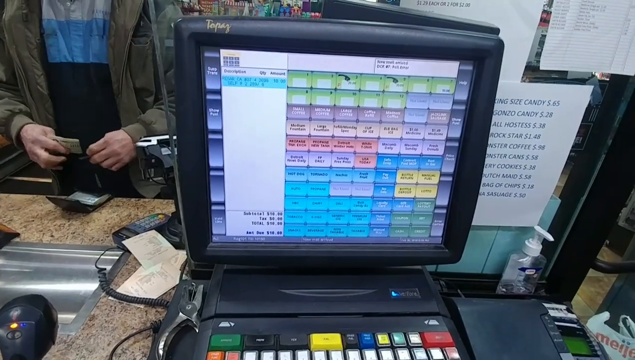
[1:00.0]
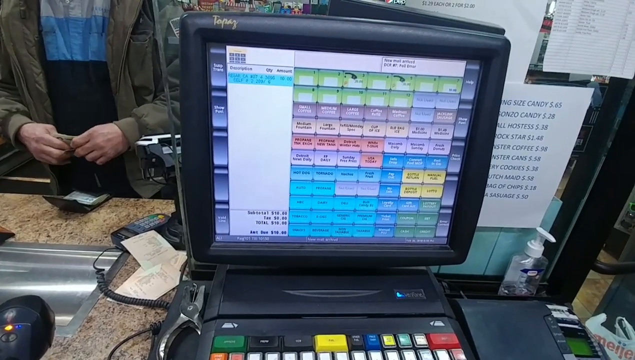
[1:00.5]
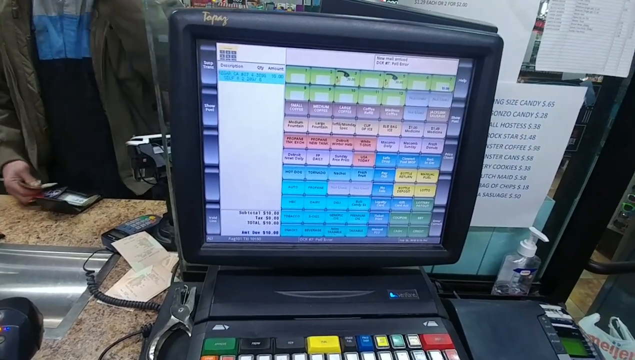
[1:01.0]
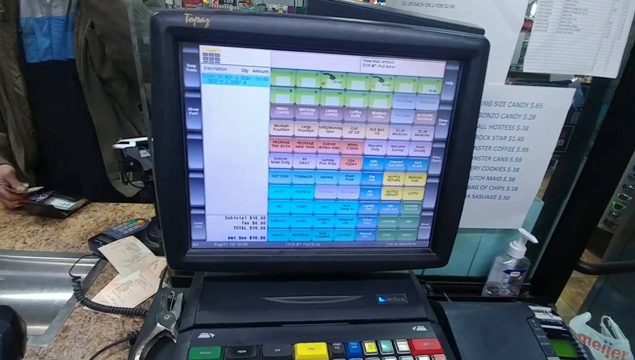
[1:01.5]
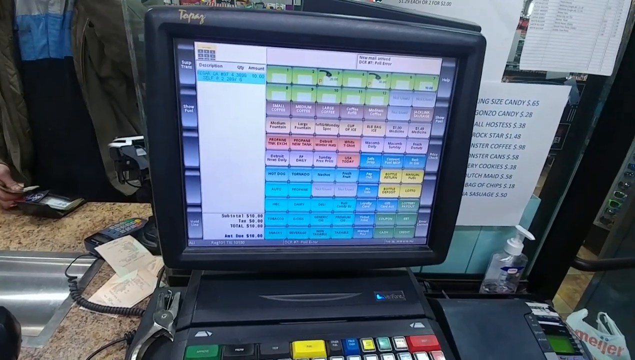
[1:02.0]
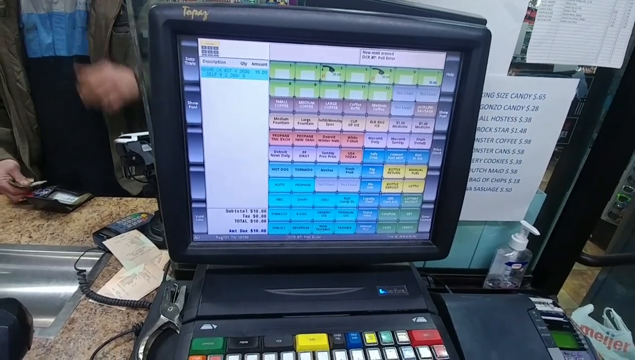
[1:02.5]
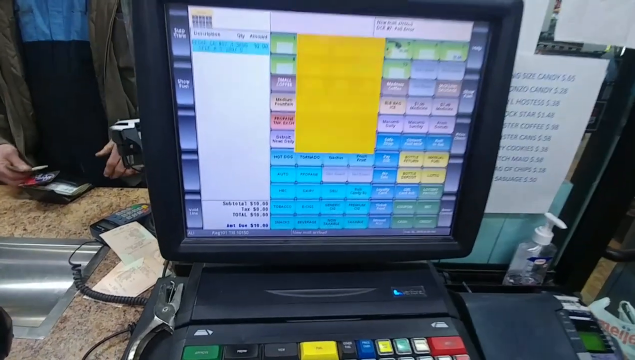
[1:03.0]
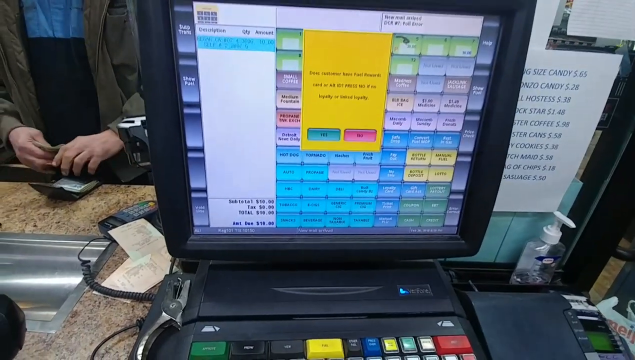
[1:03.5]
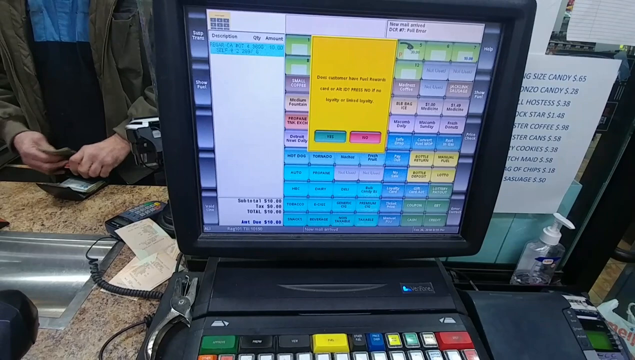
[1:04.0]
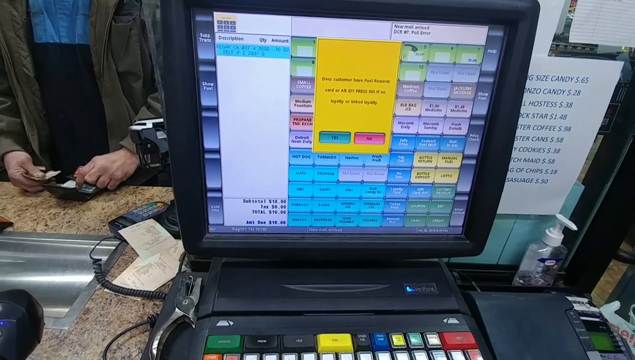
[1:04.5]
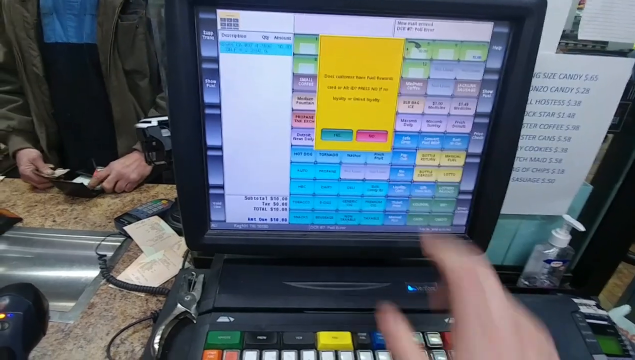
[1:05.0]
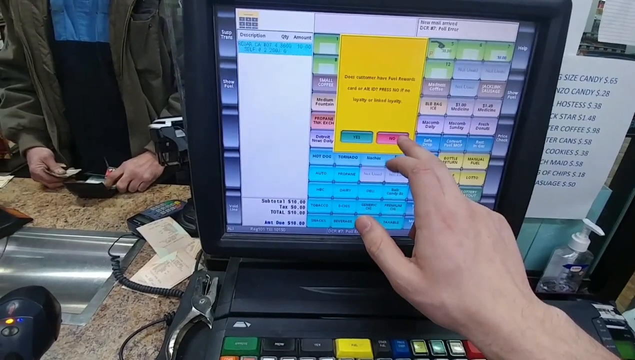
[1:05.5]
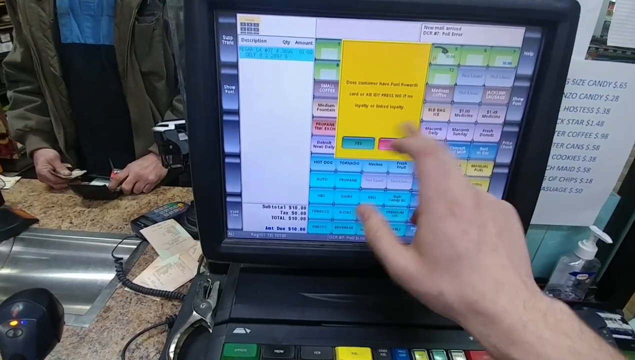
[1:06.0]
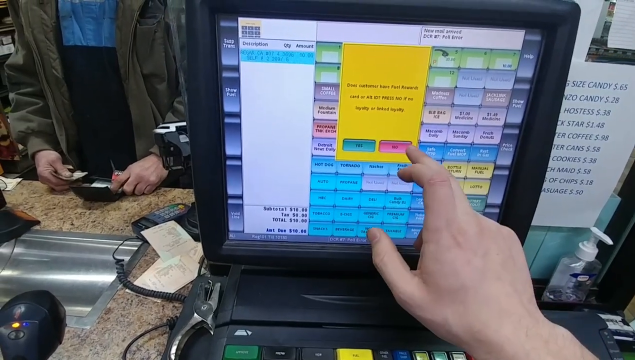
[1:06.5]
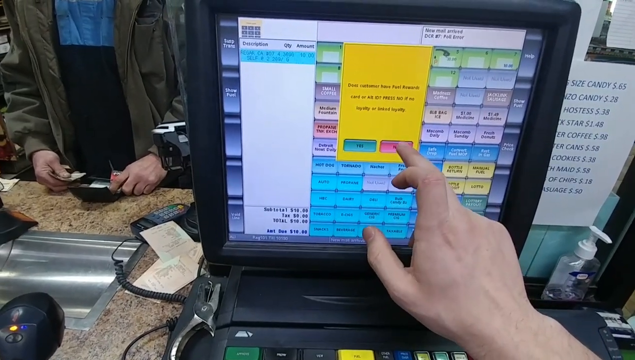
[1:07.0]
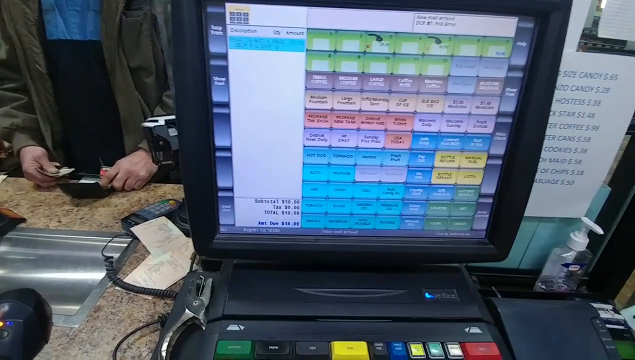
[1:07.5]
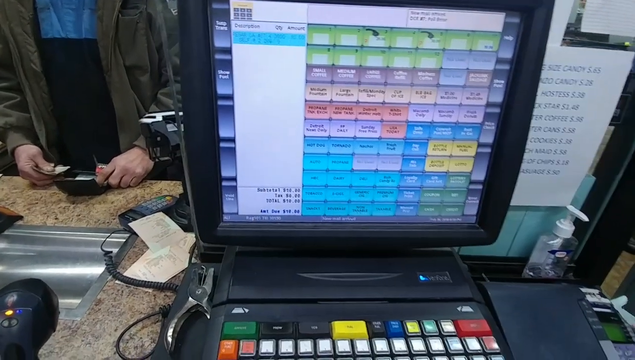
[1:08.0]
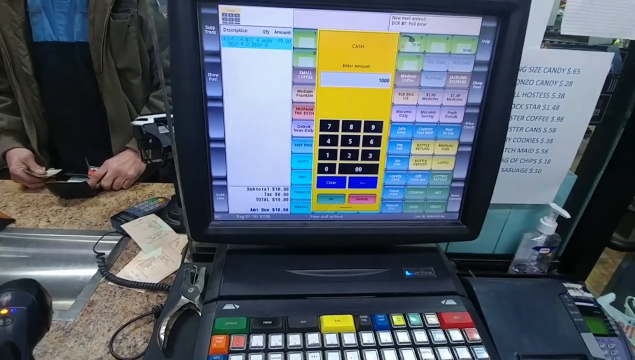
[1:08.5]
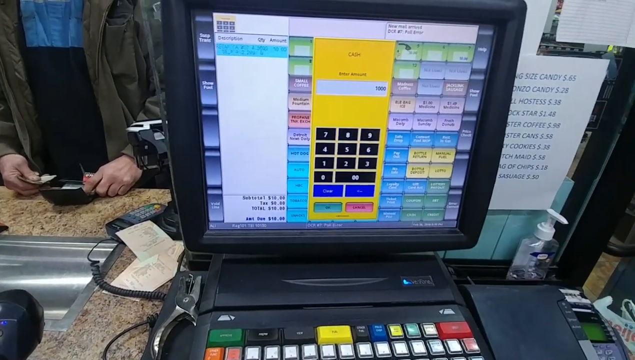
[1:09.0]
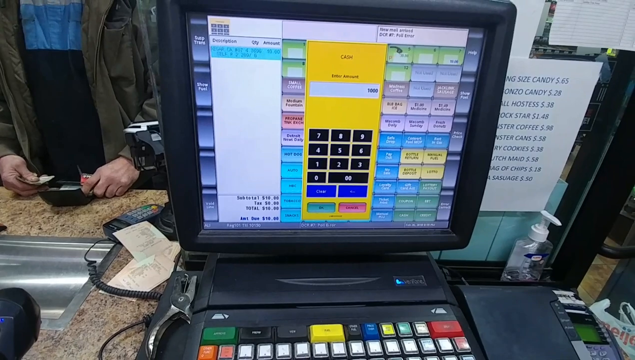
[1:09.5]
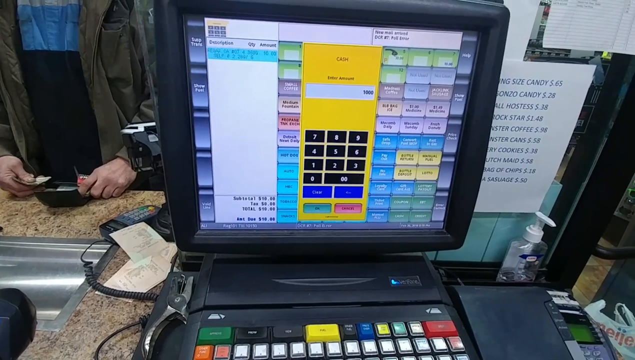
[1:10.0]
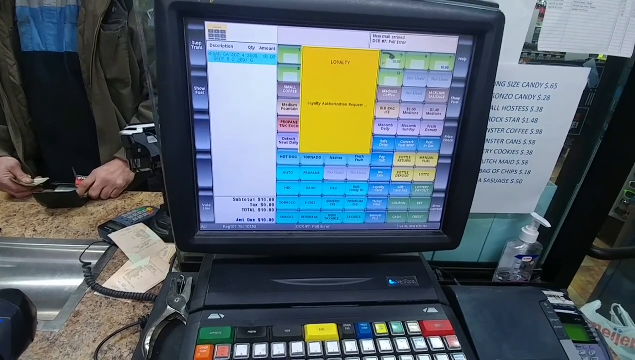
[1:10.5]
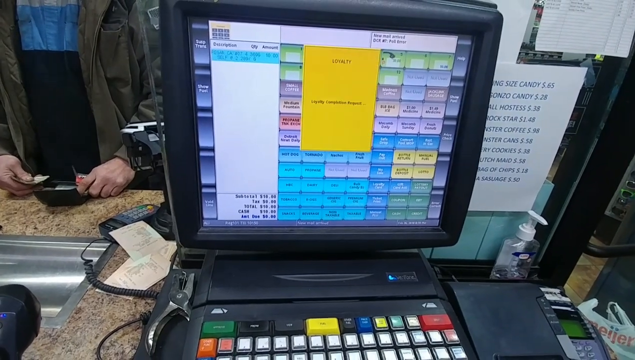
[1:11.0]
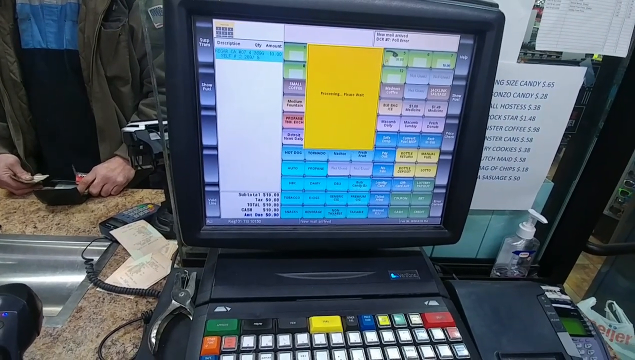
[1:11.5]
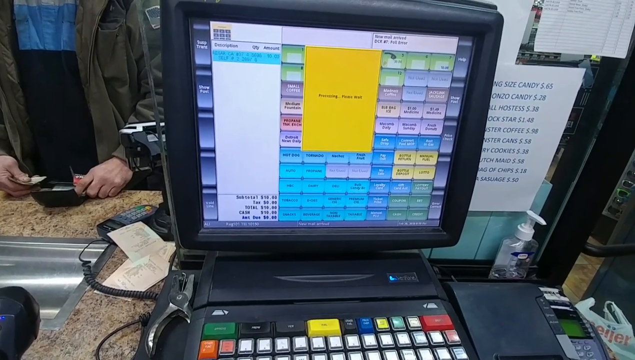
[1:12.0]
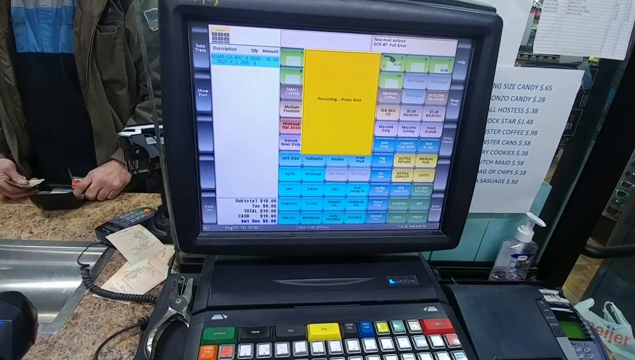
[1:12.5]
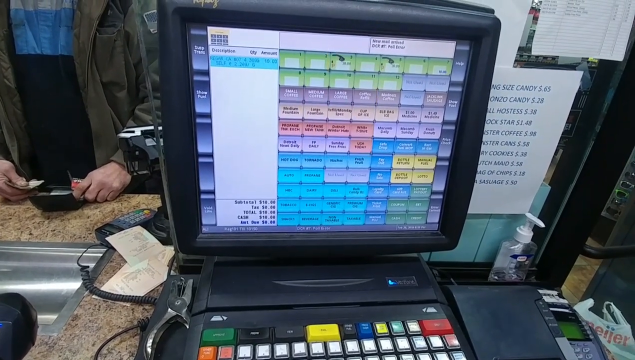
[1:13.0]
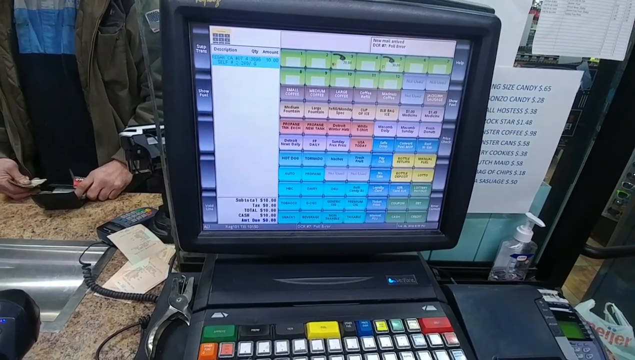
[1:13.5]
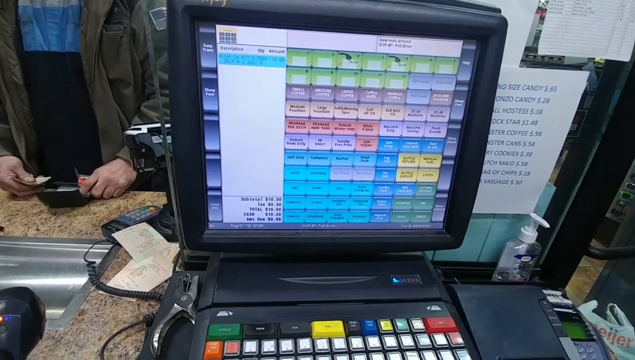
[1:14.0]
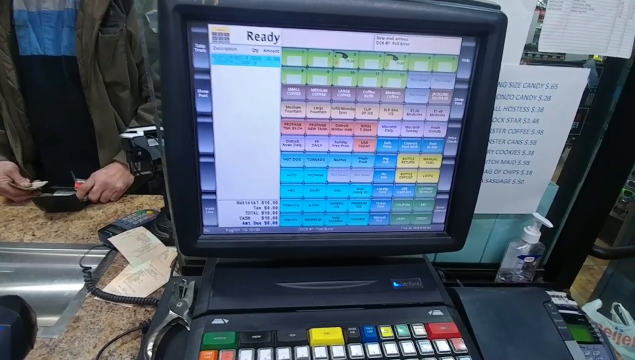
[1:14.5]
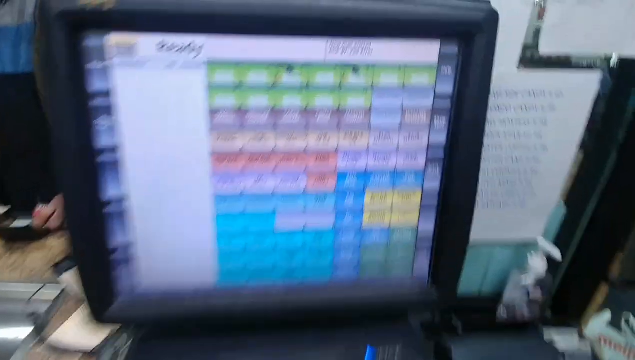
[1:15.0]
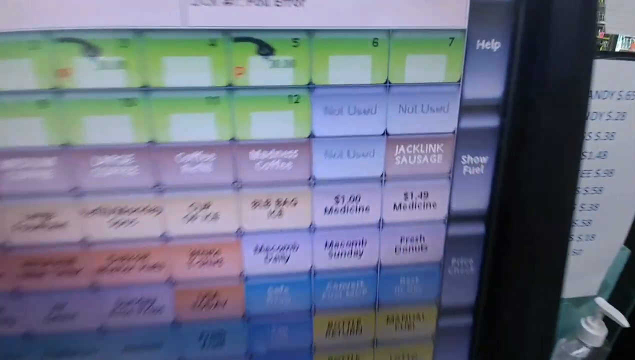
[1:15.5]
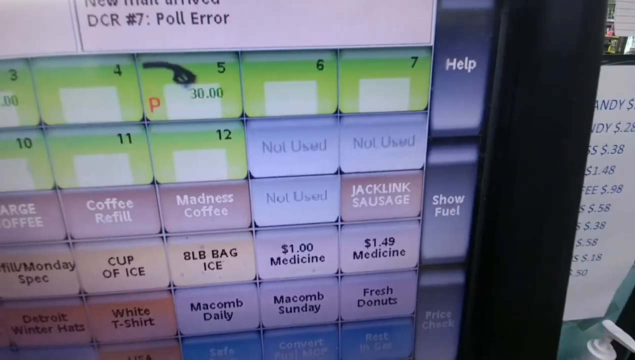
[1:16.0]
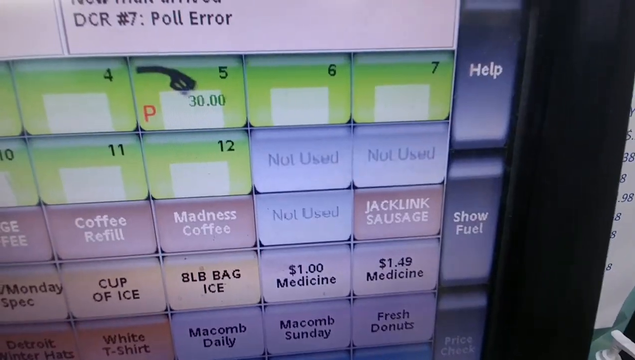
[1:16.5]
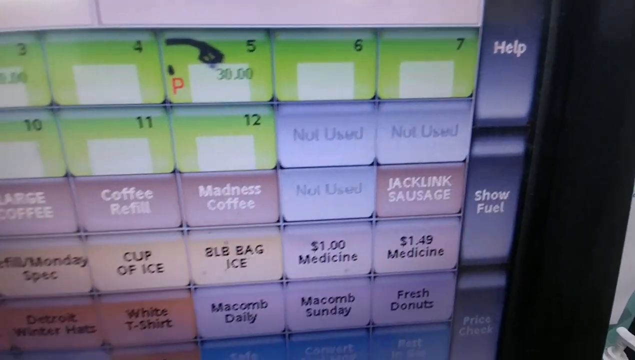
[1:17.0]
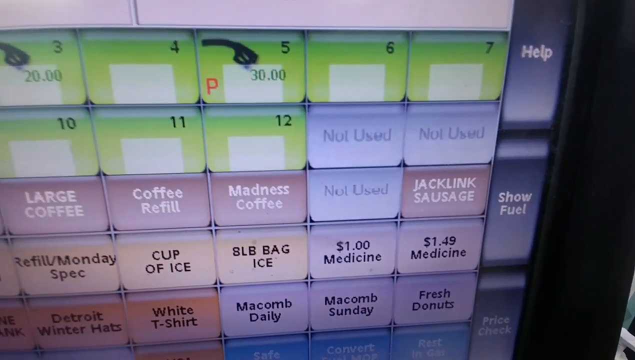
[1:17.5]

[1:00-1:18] A customer is on the left side of the screen with their wallet open, holding keys in their left hand and some dollar bills in their right hand. They wear an olive jacket with a blue, navy and baby blue shirt. The cashier checks the customer out for fuel, which looks to be $10 worth. The cashier selects that the customer is not a loyalty member and enters 10-0-0 for $10. The computer says "processing, please wait". In the receipt description it says "regular CA number 07", with a quantity of 4 gallons and 36 and an amount of $10. The subtotal is $10, the tax is $0, the total is $10, the cash is $10, and the amount due is $0.